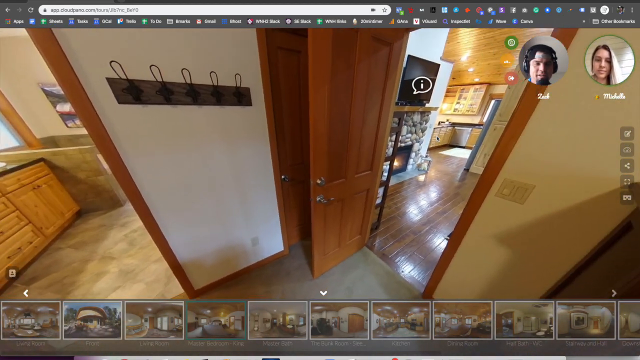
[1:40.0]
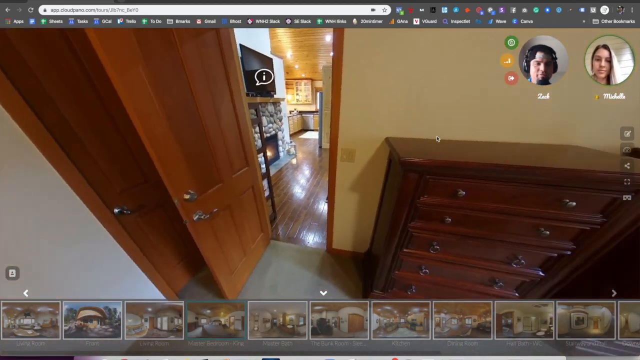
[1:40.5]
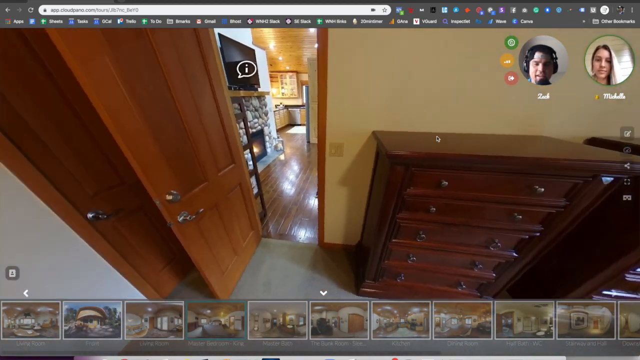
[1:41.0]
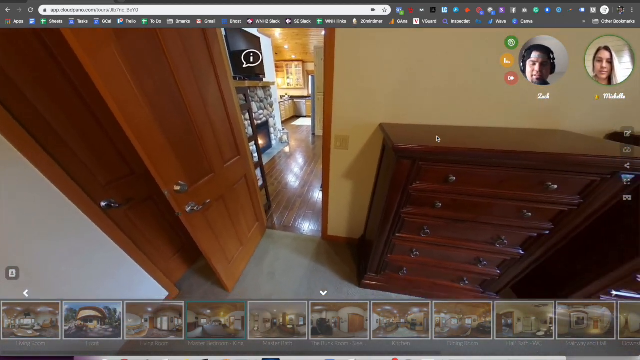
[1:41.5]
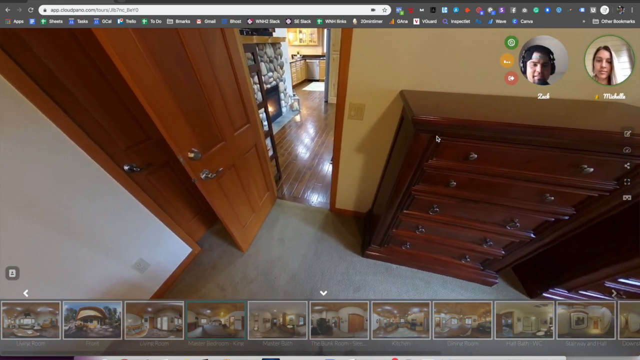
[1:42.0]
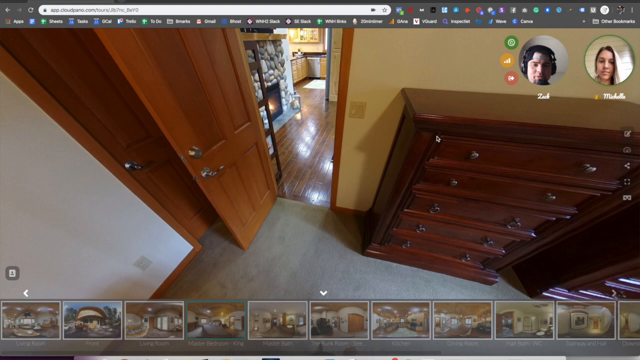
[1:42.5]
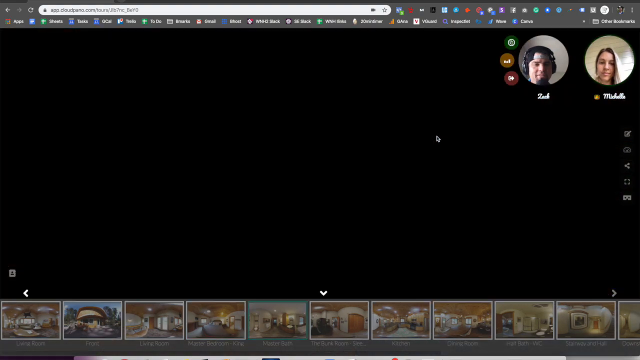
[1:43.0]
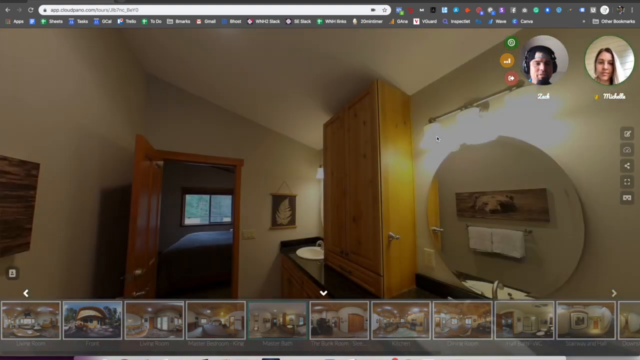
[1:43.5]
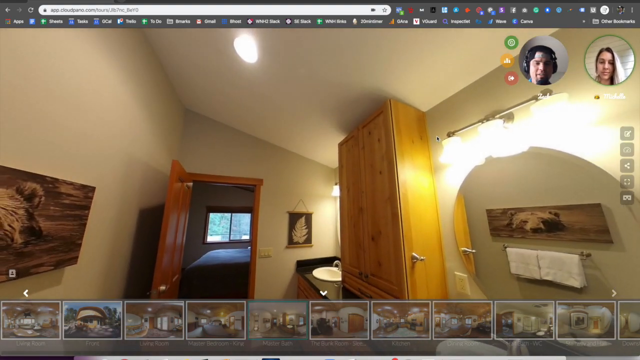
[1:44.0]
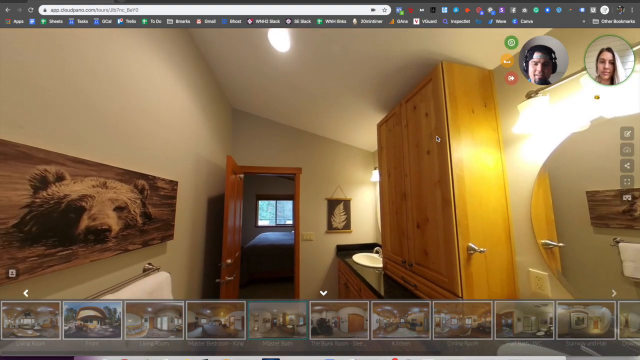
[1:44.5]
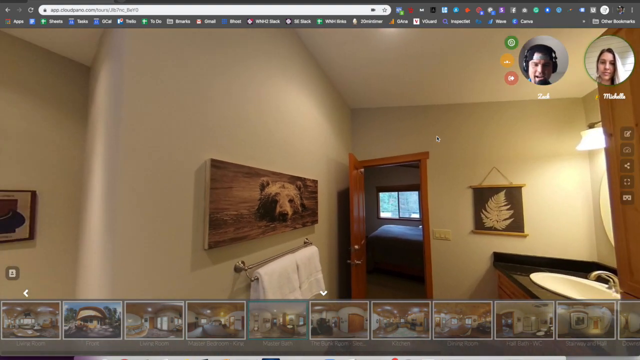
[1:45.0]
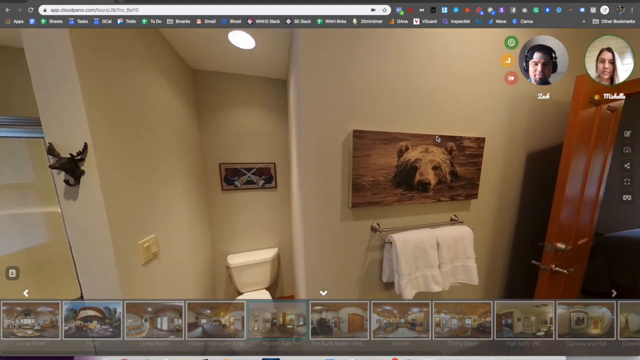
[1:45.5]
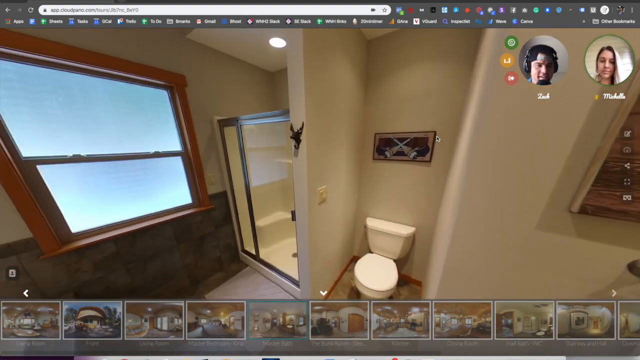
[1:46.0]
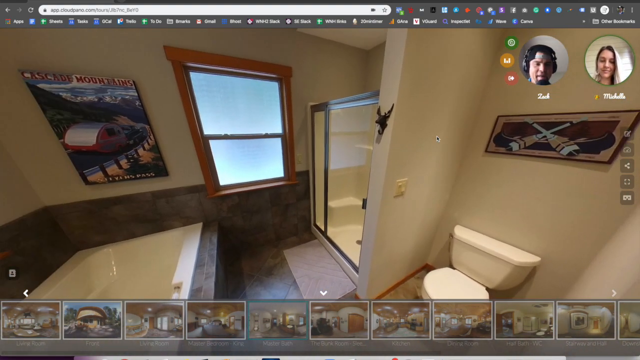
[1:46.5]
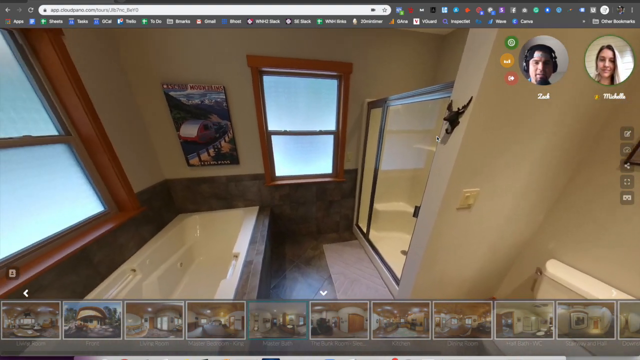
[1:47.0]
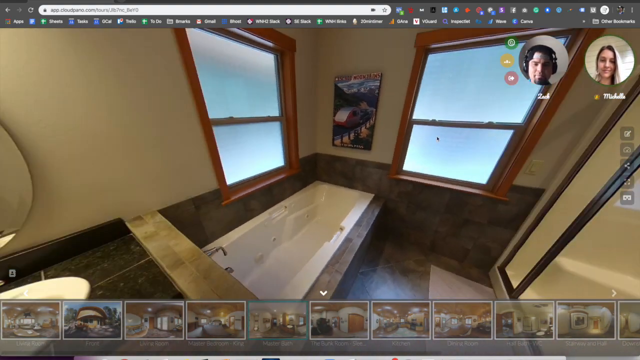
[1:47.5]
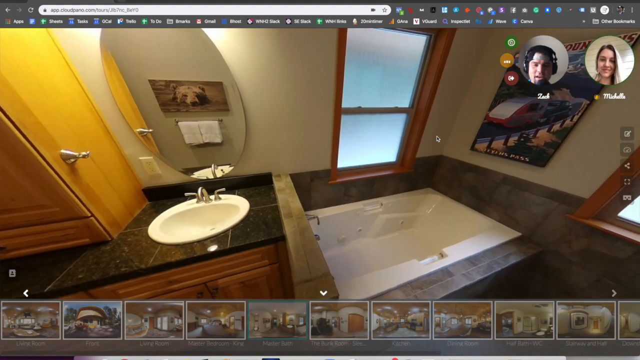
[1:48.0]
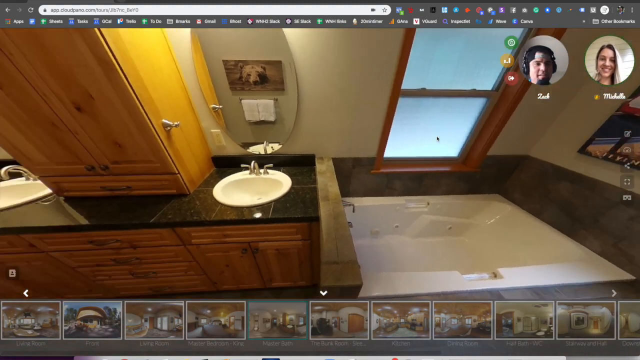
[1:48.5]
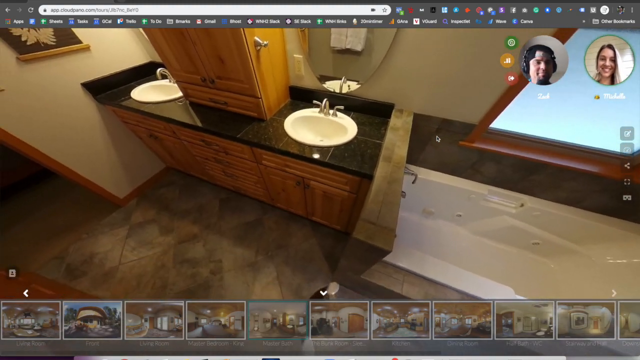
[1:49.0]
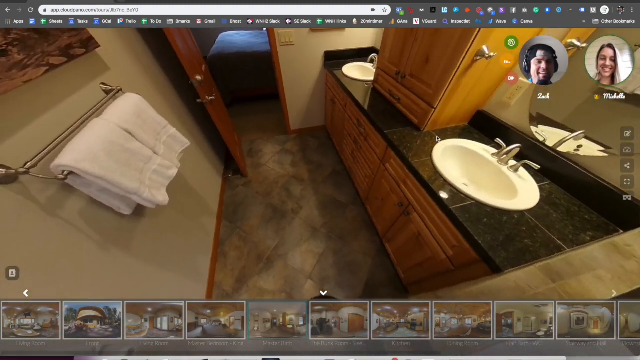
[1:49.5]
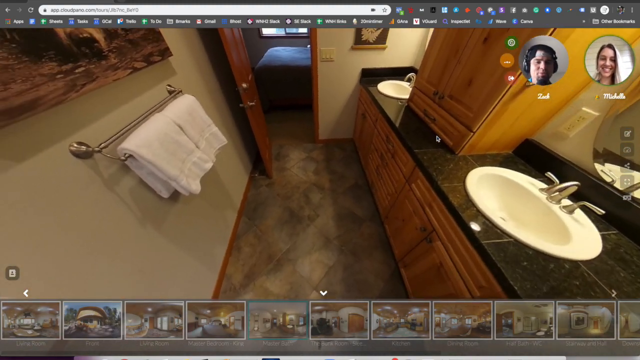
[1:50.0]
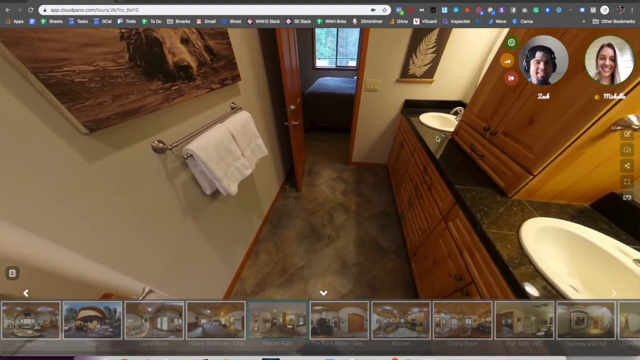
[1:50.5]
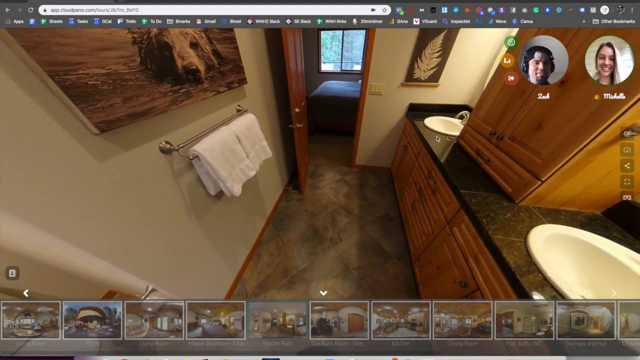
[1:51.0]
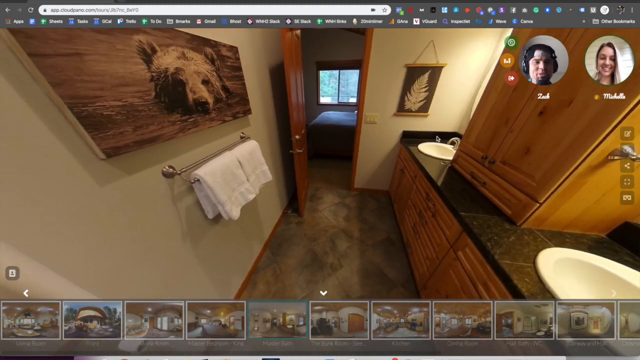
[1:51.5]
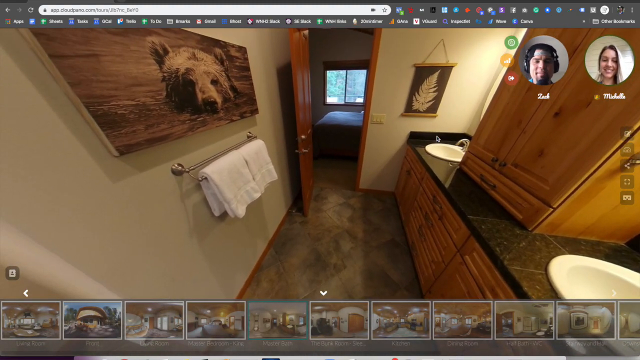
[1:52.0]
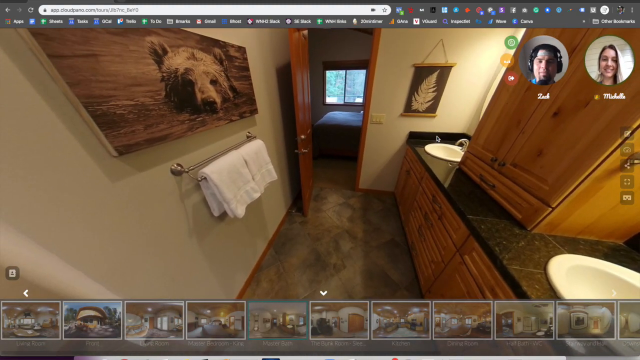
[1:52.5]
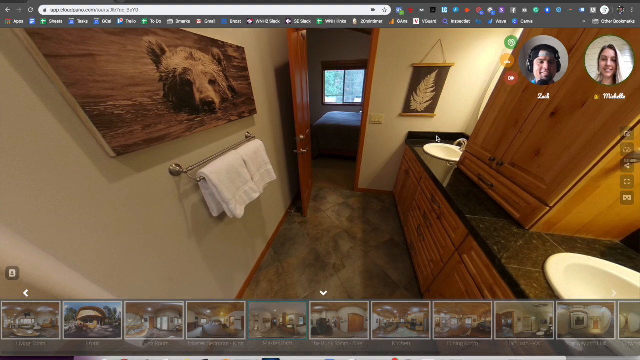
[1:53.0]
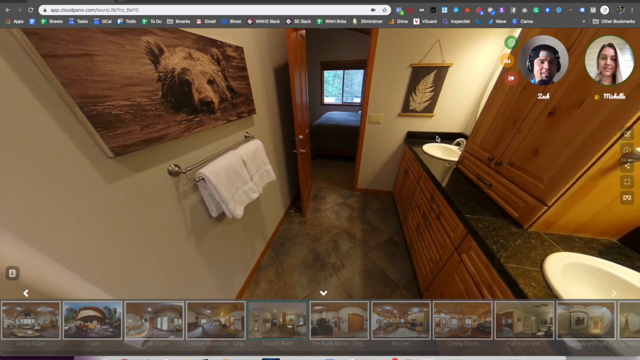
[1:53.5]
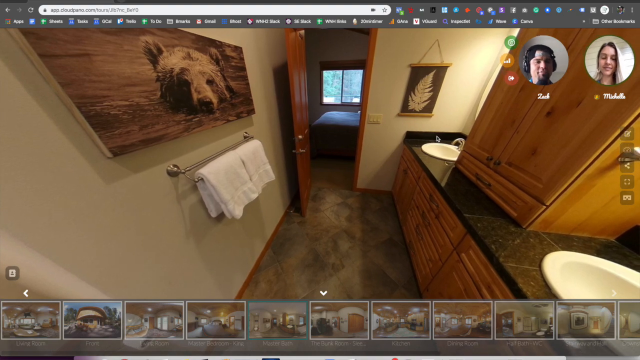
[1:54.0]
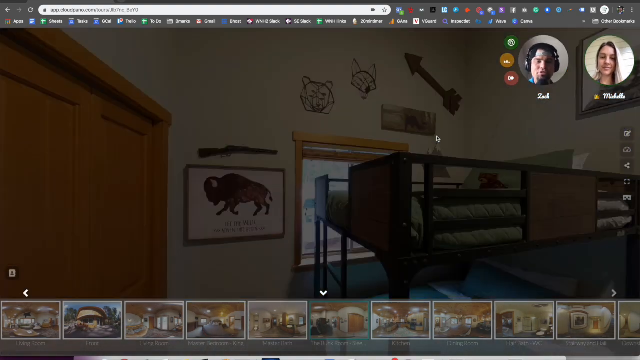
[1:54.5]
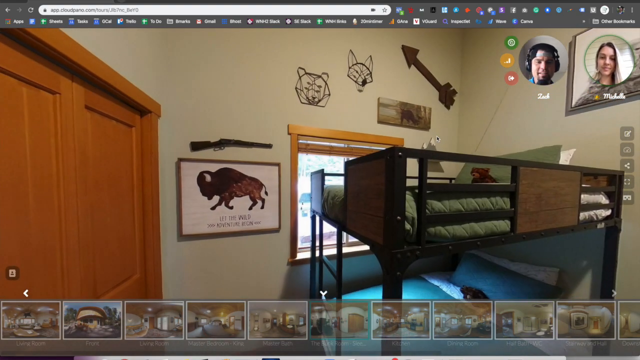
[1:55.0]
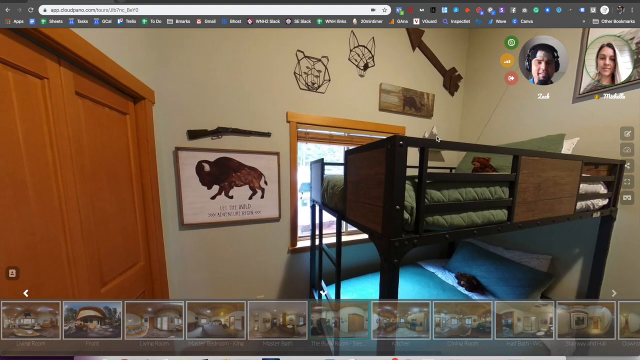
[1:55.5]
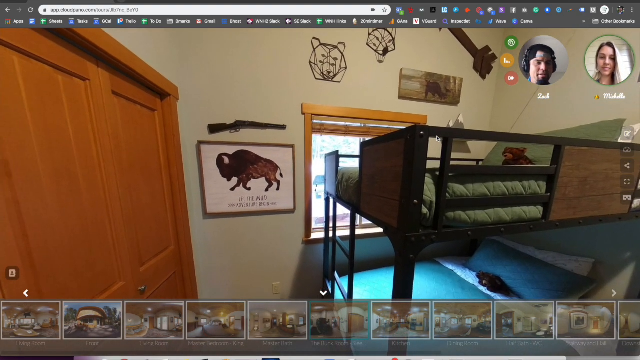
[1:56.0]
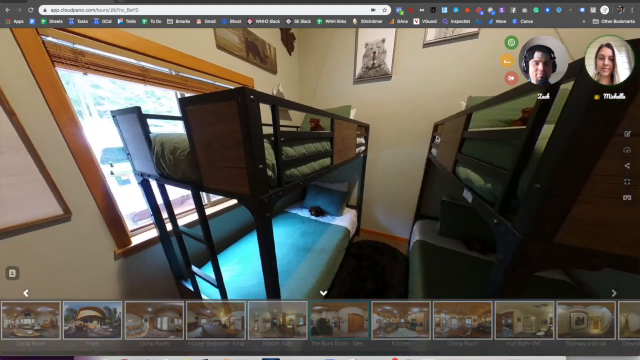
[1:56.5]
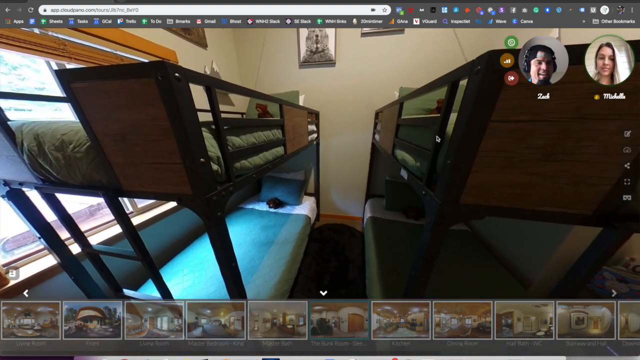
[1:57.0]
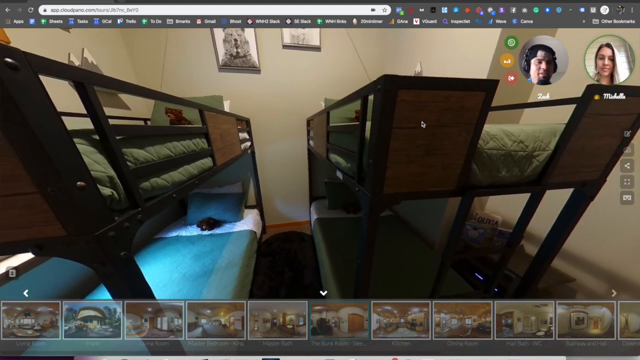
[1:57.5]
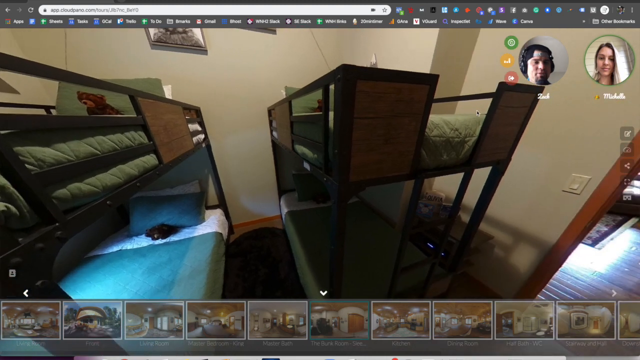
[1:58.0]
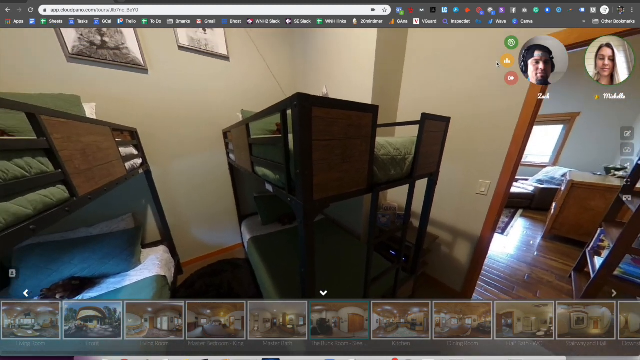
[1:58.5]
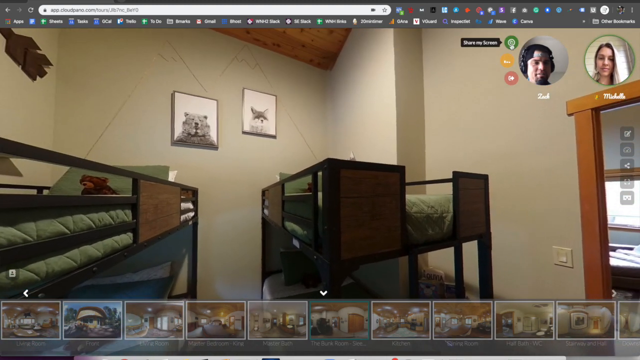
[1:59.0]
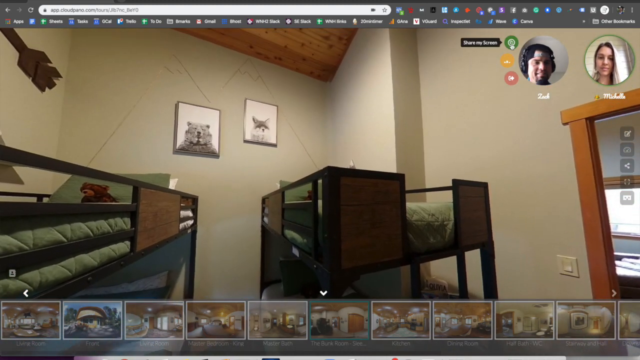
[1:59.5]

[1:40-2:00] Two people are playing virtual reality together. By the man's circular picture there is a green button, with a yellow button below it and a red button below that. Right beside him on the right is a picture of a girl in a circle surrounded by green; her name is Michelle, and his name is Zach. Someone is controlling the screen, going from room to room. In a bathroom, a shower is separate from a big tub, there are two sinks, and the counter is divided by kind of a cupboard on top. The bathroom floor has linoleum and oak wood. Next is a room with two sets of bunk beds. In the main bedroom there are five hooks on a beige wall.